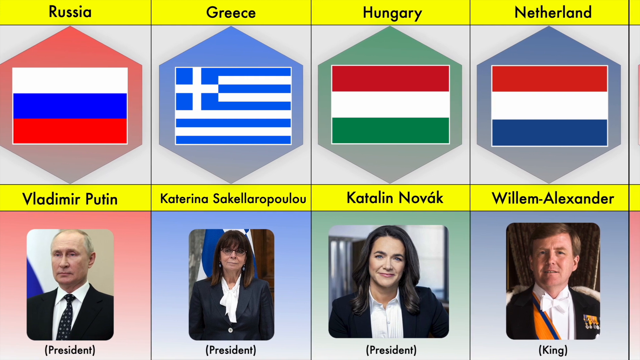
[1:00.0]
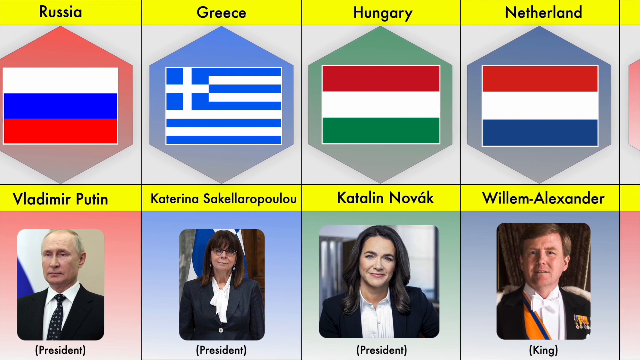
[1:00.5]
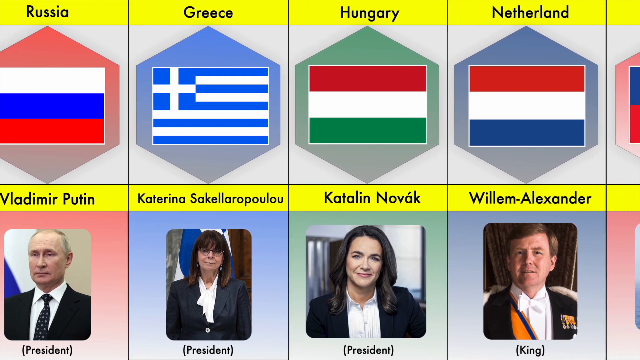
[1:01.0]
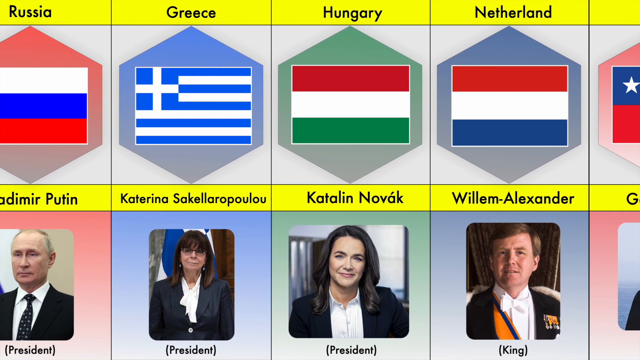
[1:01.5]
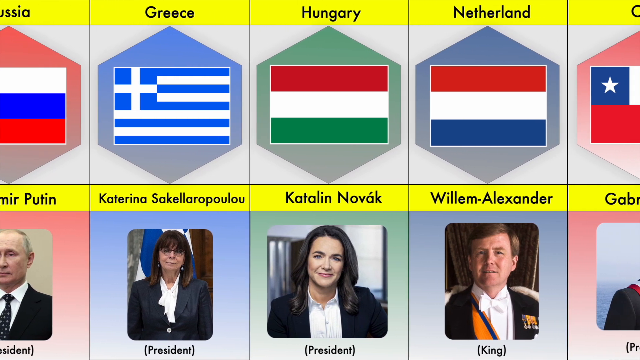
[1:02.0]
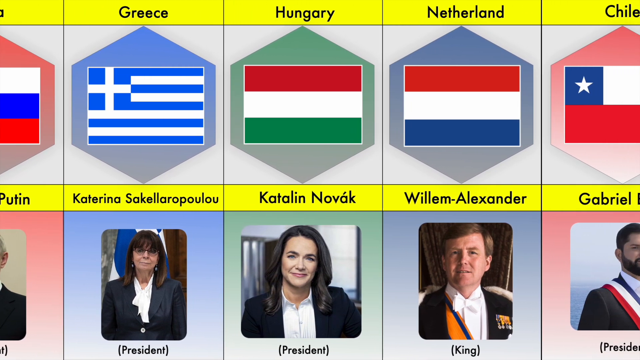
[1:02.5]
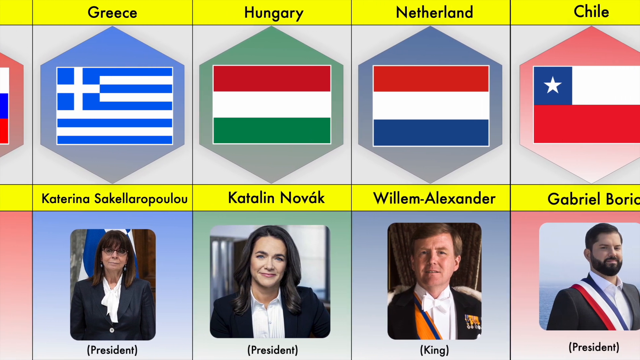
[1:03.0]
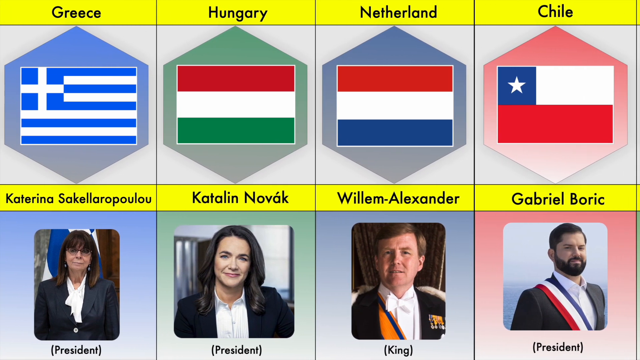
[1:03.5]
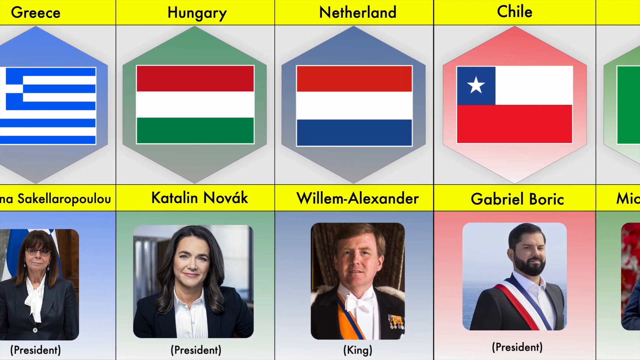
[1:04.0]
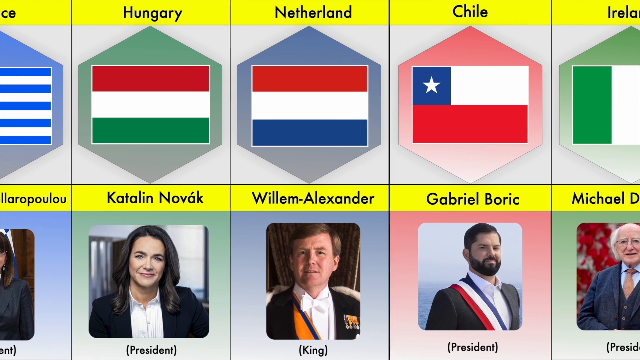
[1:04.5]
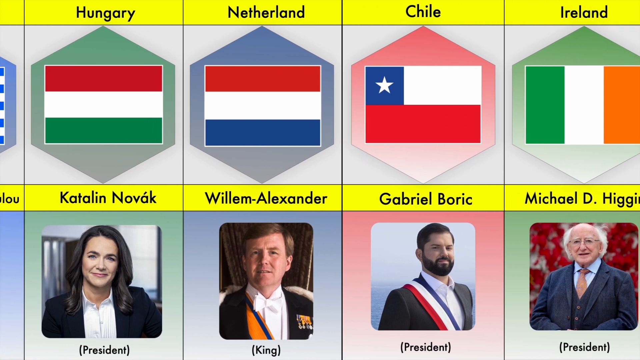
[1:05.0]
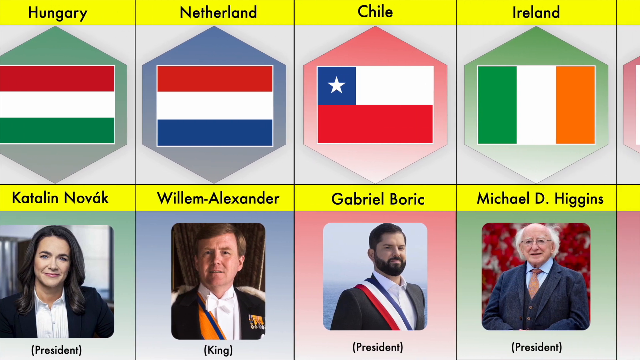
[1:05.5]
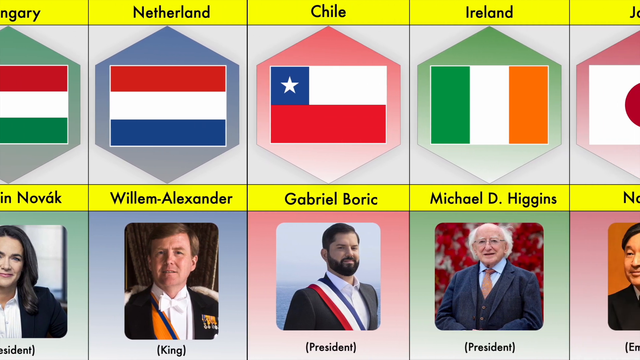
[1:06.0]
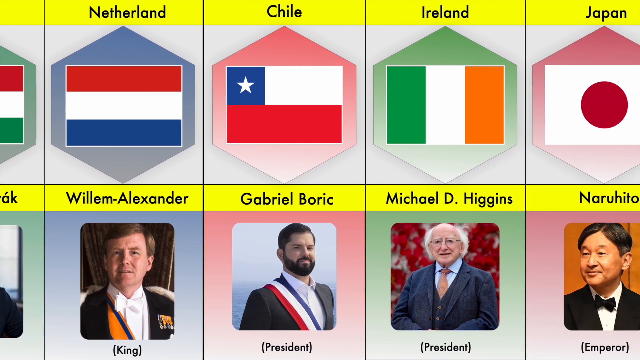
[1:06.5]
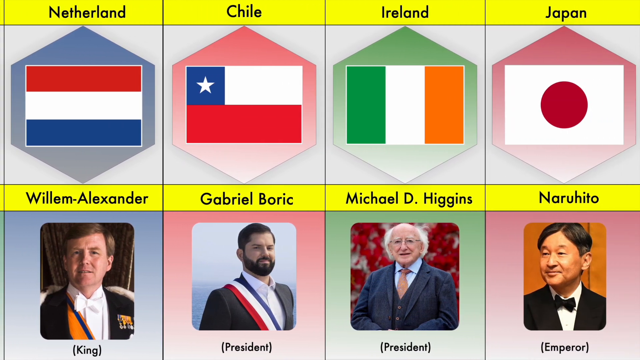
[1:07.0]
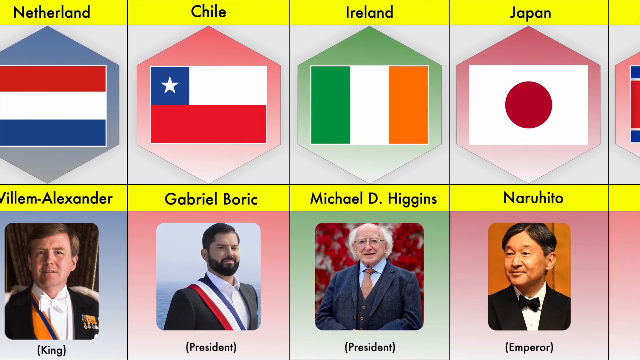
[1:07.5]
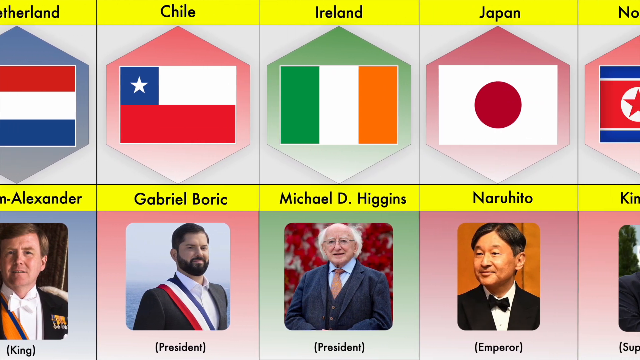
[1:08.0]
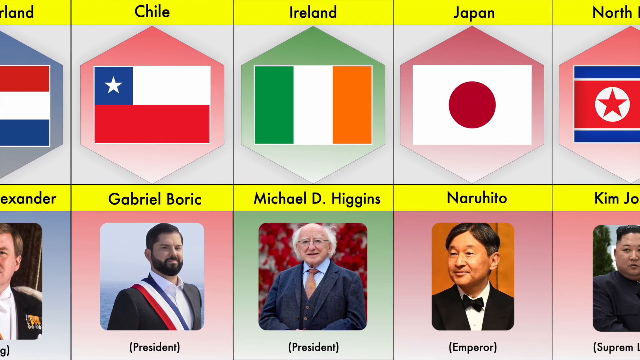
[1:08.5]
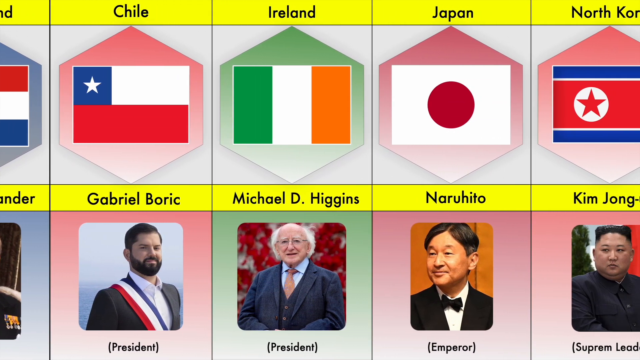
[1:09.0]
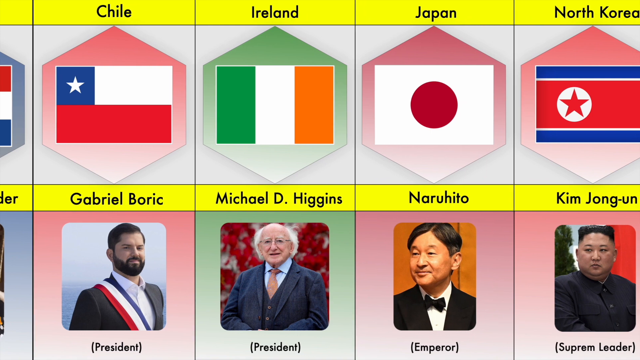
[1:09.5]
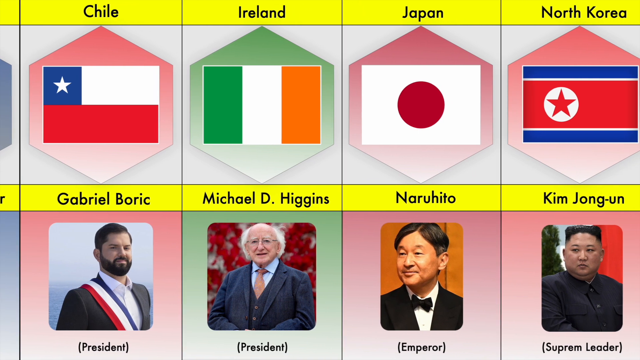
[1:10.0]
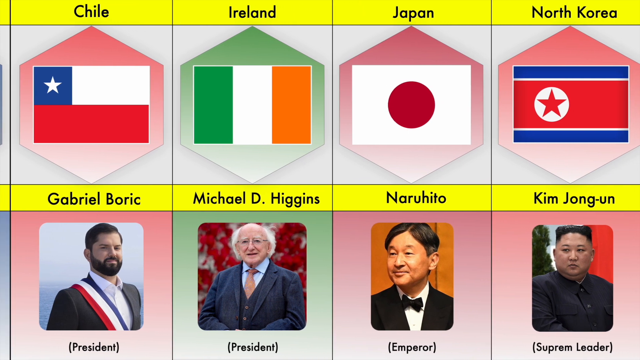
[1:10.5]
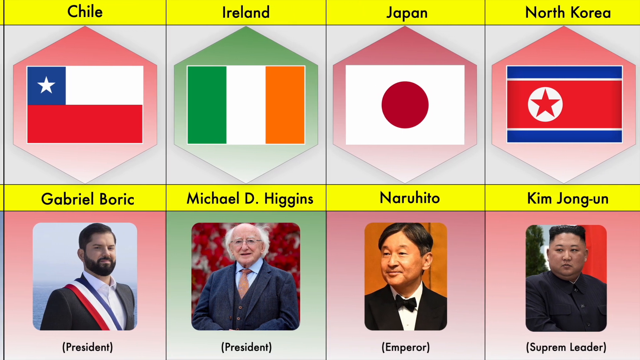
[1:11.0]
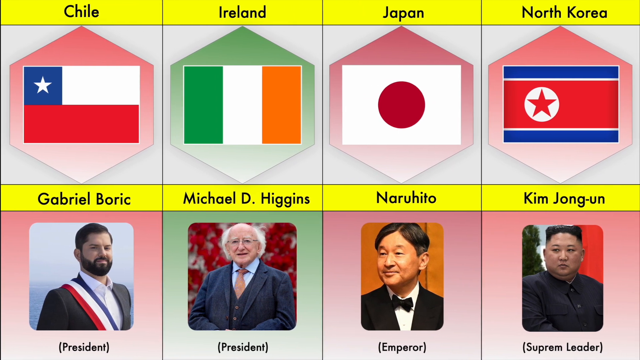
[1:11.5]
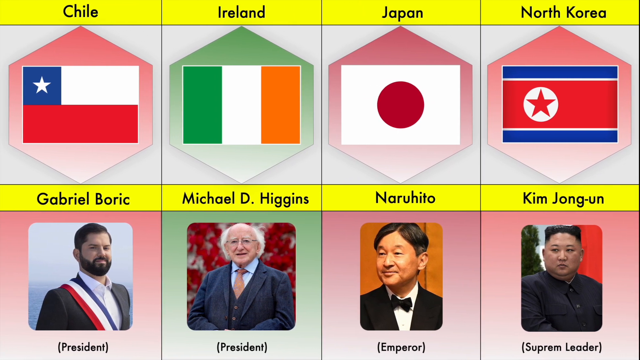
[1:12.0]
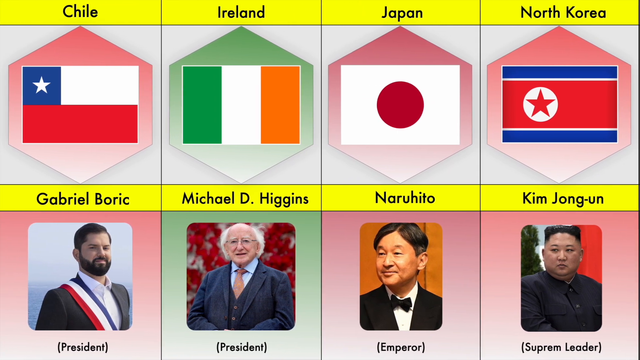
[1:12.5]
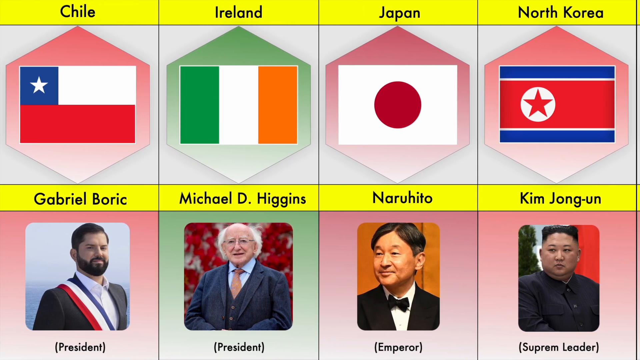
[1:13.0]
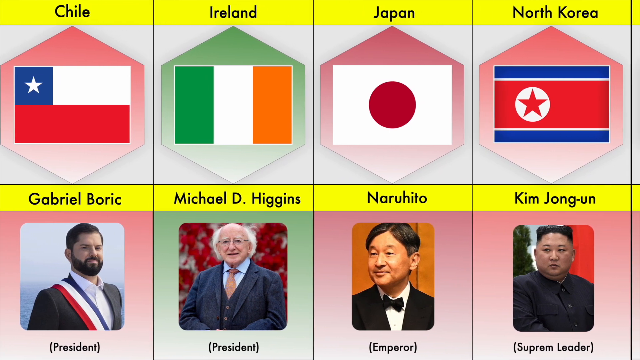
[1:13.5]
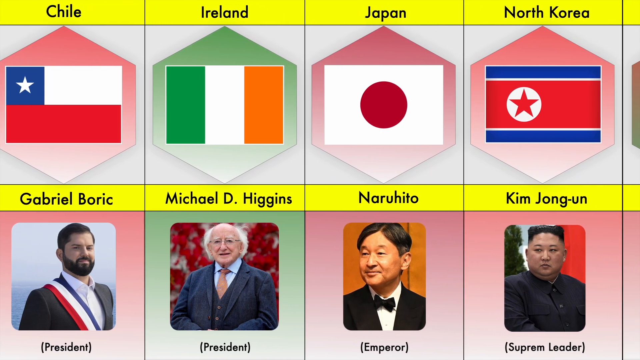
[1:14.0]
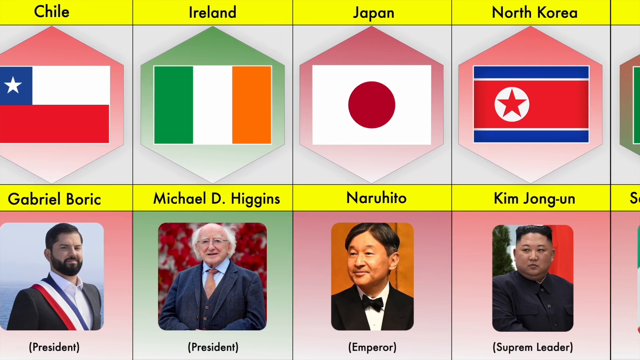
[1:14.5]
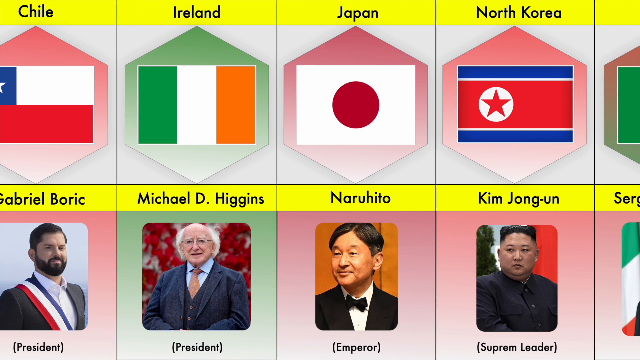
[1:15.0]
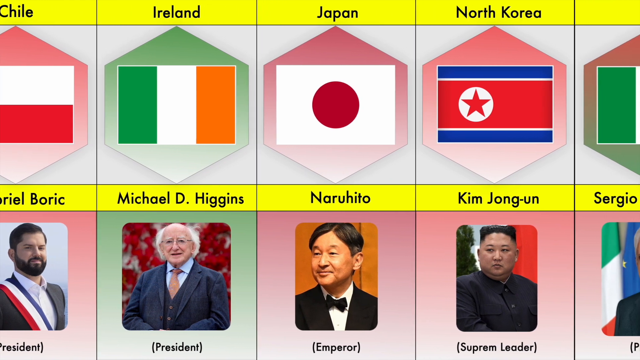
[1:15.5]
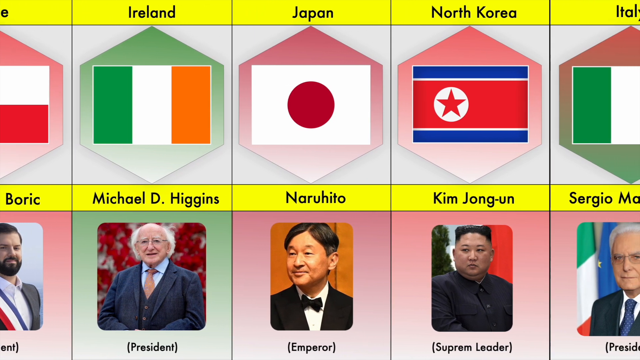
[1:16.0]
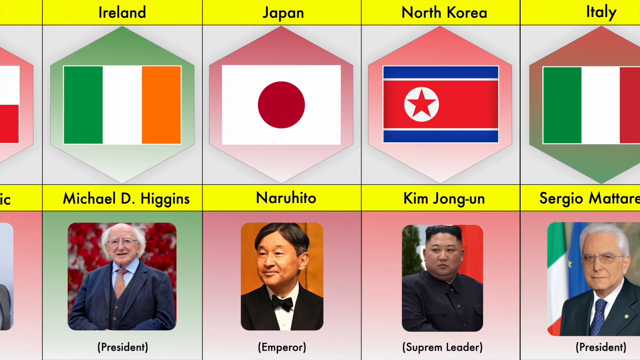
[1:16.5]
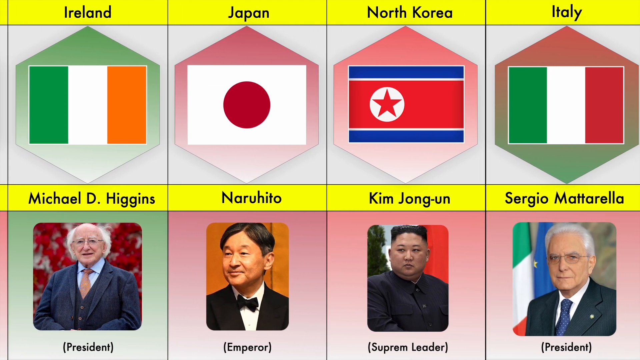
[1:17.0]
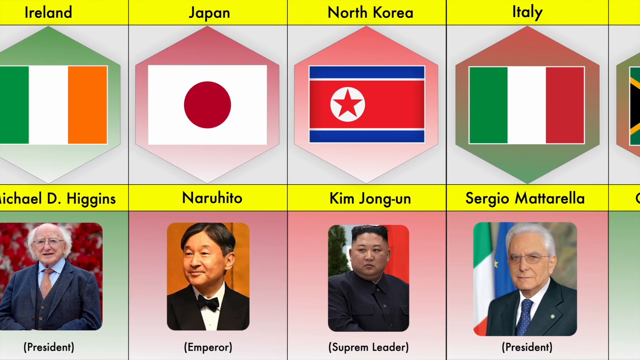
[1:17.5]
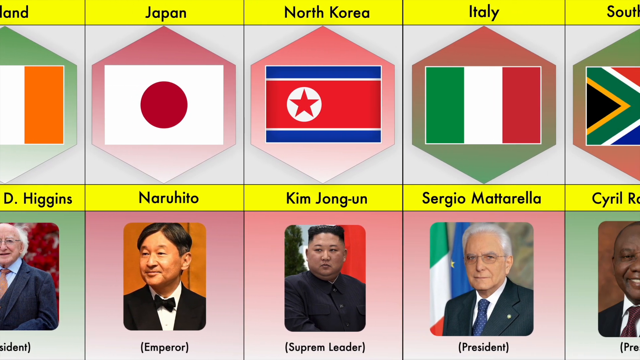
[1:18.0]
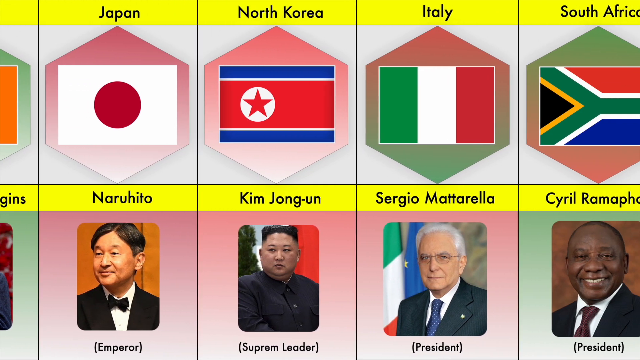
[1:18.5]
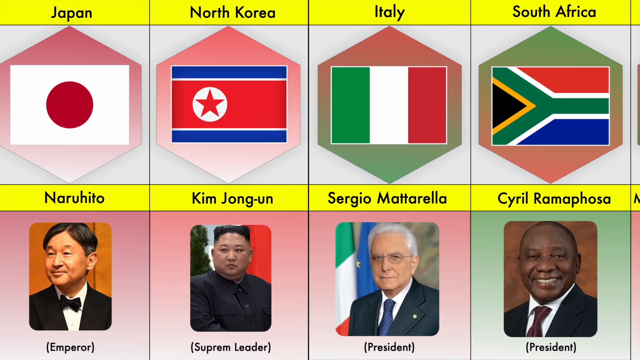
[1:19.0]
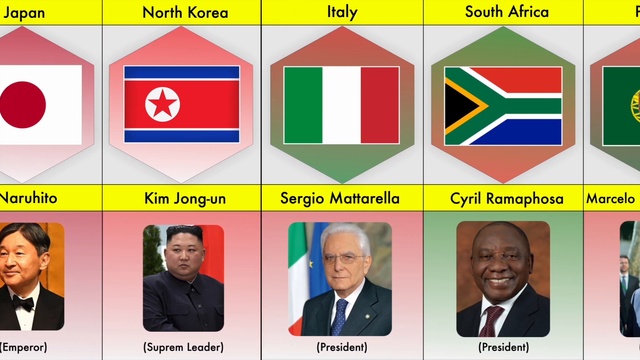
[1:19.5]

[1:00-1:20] World leaders are shown in a row at the bottom of the screen, with some exiting the scene as new leaders enter. Examples include Supreme Leader Kim Jong-un of Korea, Willem-Alexander, King of the Netherlands, and the President of Chile, Georg Wilbork, along with presidents of other countries. They all appear enthusiastic, their portraits shown facing the audience at the bottom of the screen, while the flags they represent are at the top of the screen. The portraits are on backgrounds of various colors.